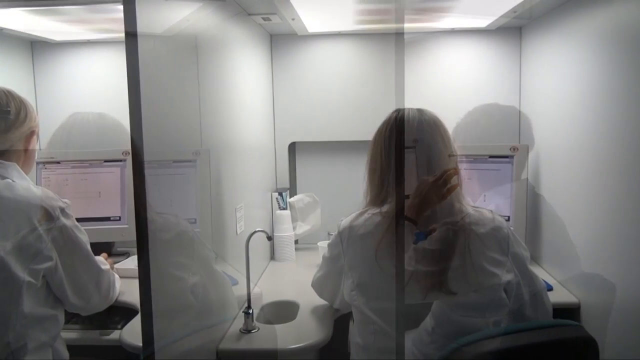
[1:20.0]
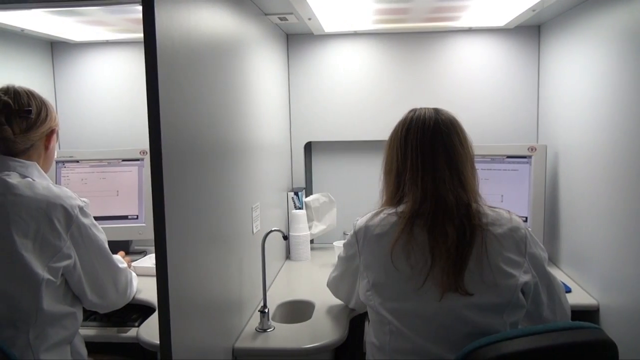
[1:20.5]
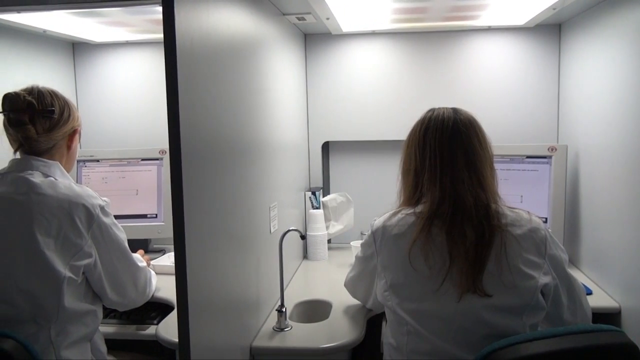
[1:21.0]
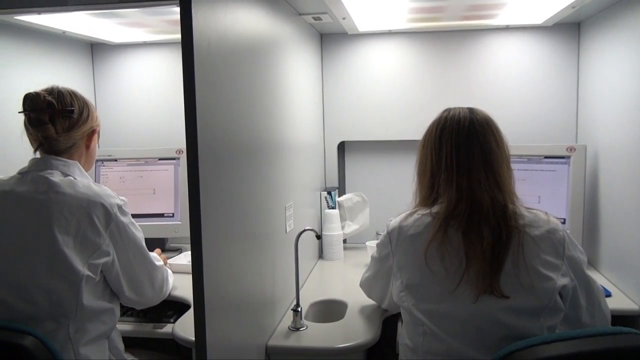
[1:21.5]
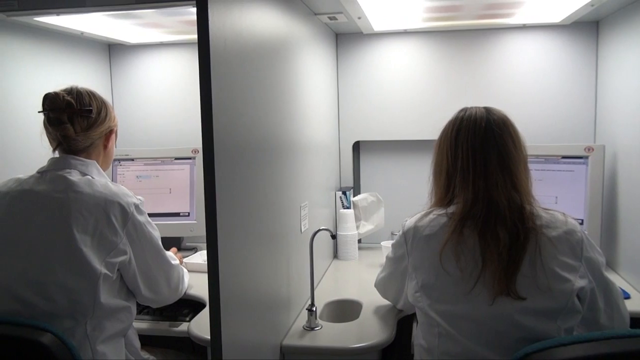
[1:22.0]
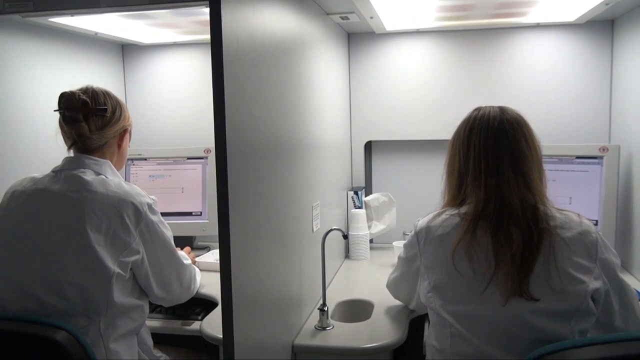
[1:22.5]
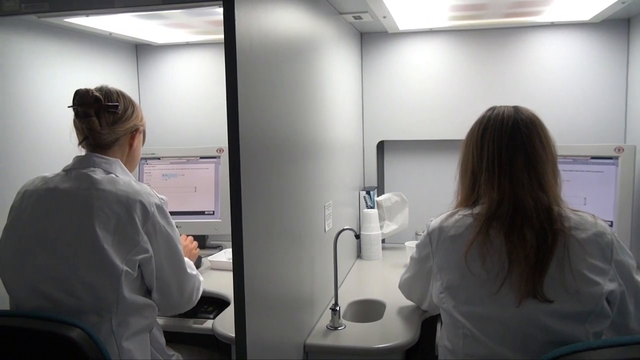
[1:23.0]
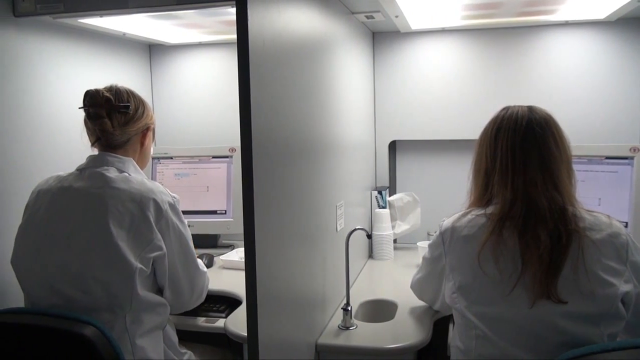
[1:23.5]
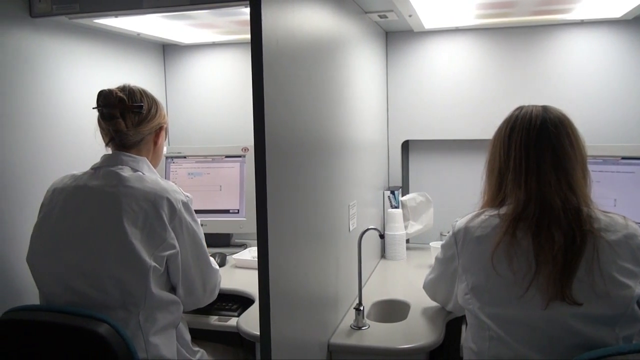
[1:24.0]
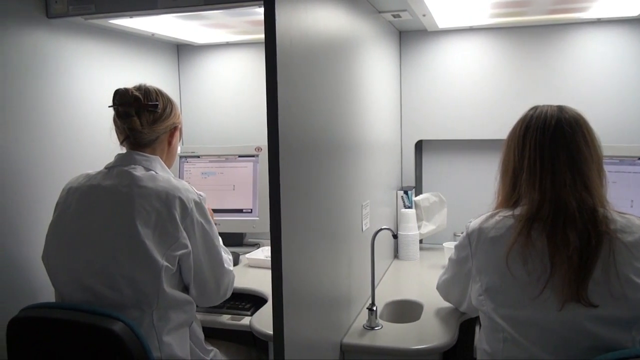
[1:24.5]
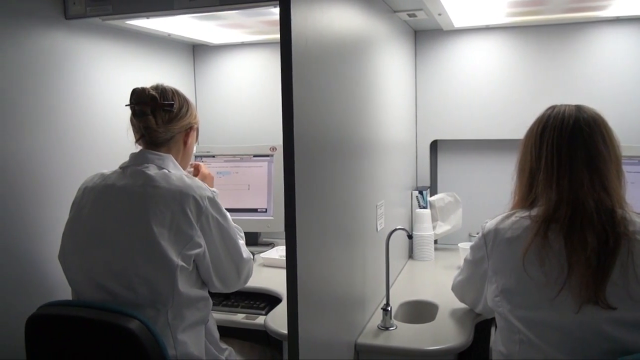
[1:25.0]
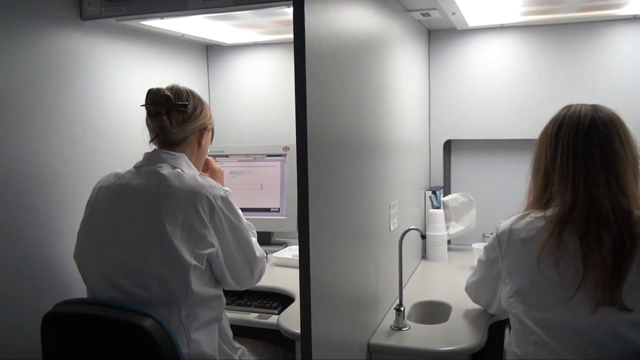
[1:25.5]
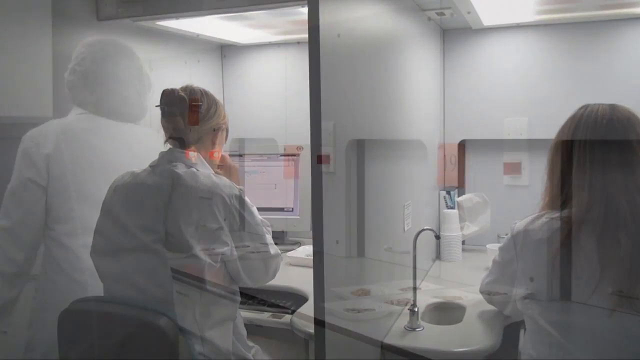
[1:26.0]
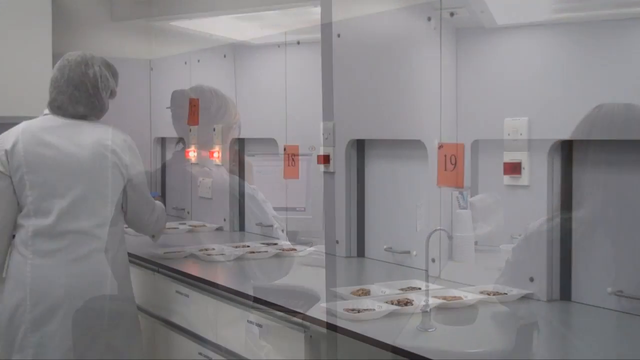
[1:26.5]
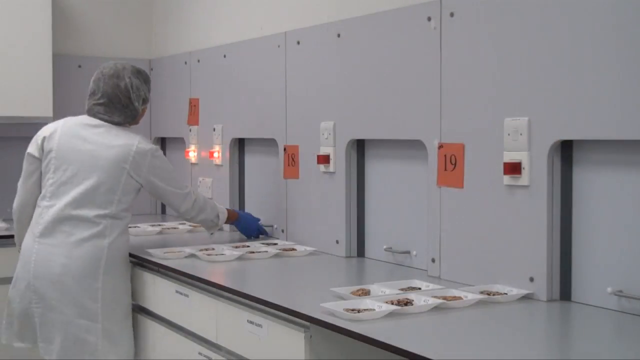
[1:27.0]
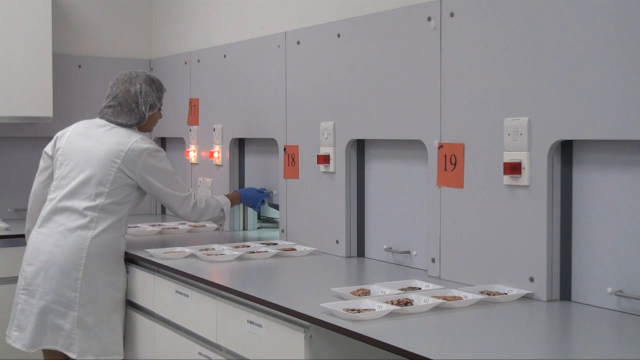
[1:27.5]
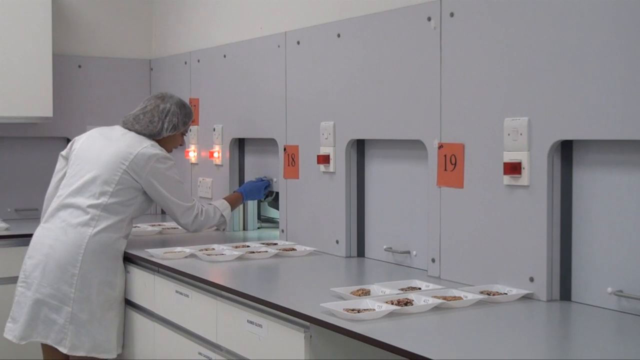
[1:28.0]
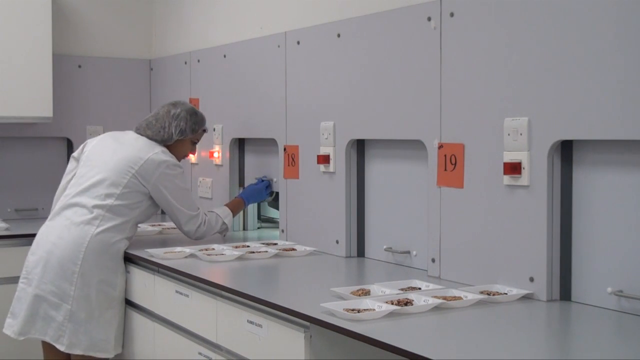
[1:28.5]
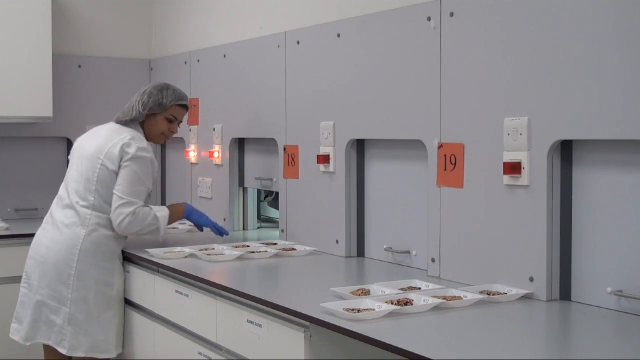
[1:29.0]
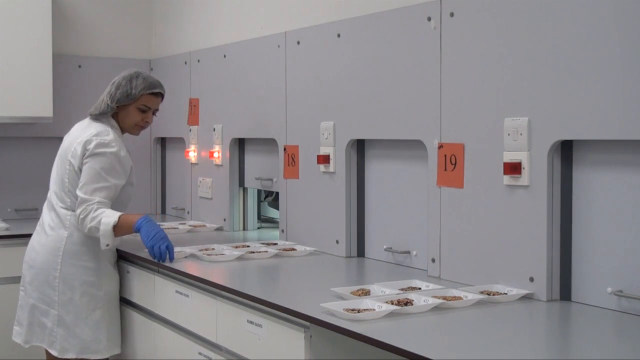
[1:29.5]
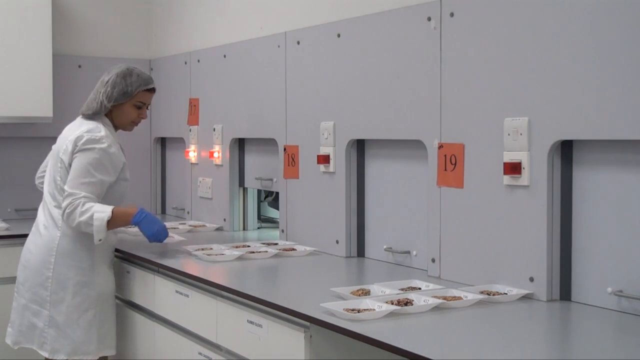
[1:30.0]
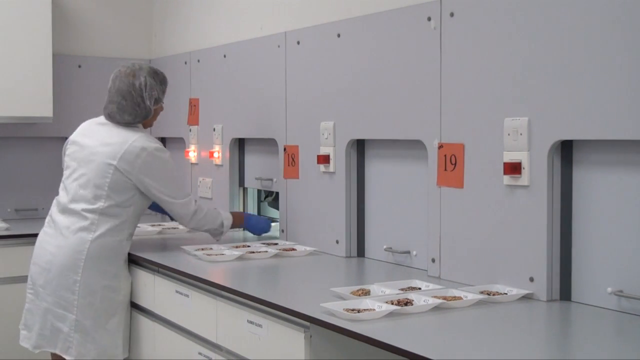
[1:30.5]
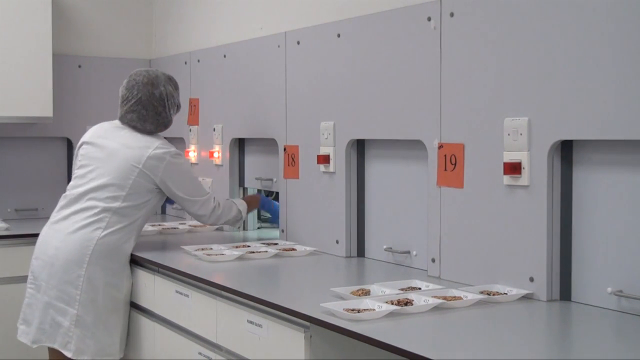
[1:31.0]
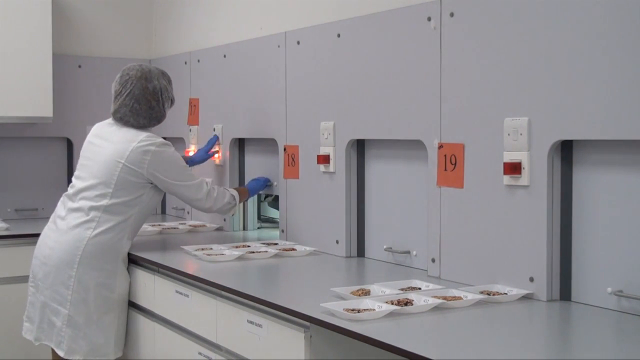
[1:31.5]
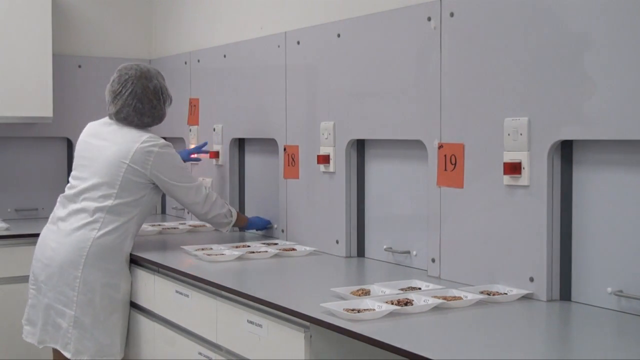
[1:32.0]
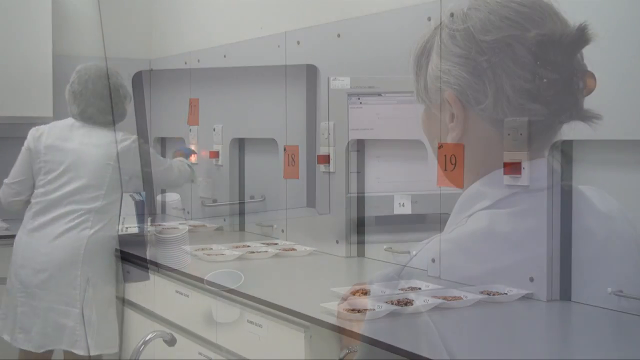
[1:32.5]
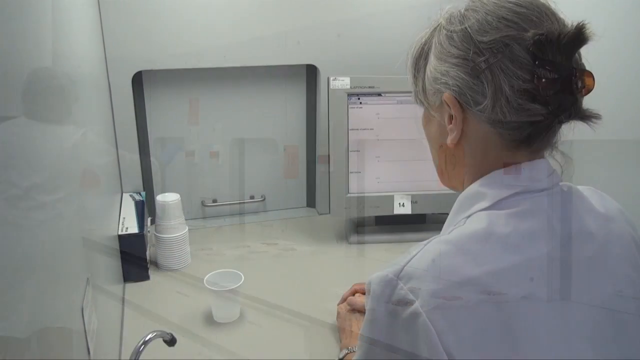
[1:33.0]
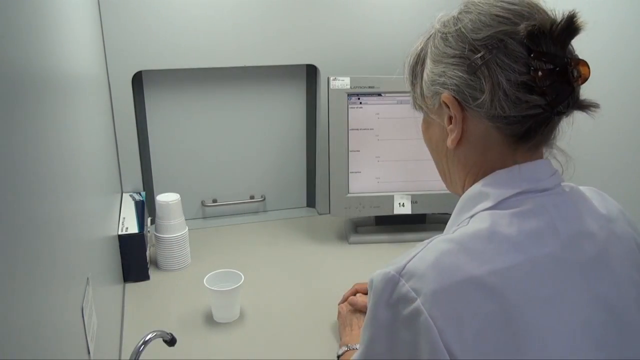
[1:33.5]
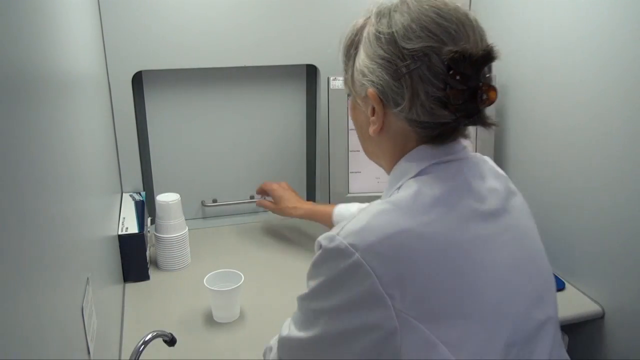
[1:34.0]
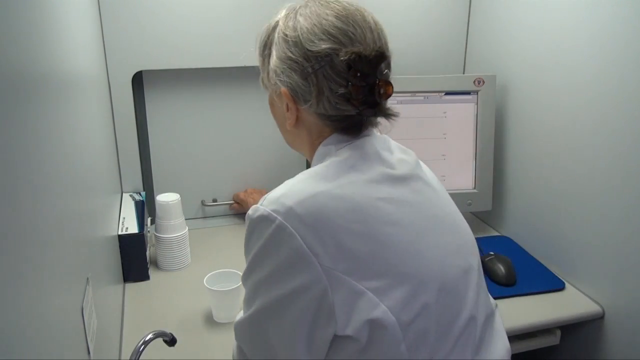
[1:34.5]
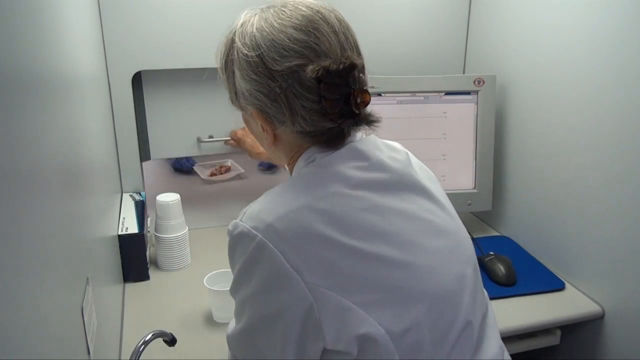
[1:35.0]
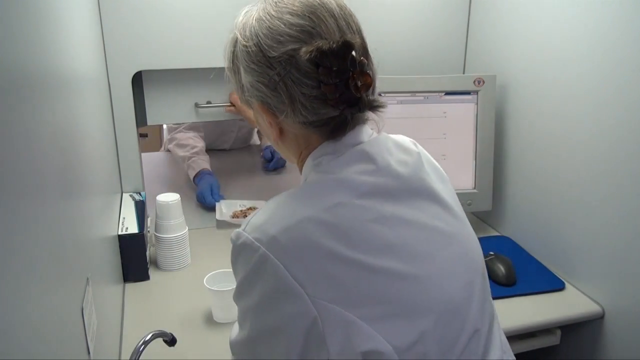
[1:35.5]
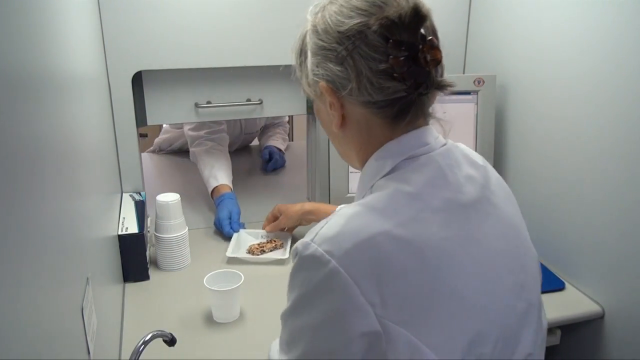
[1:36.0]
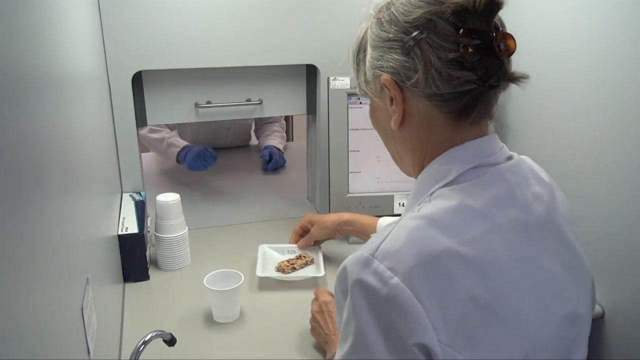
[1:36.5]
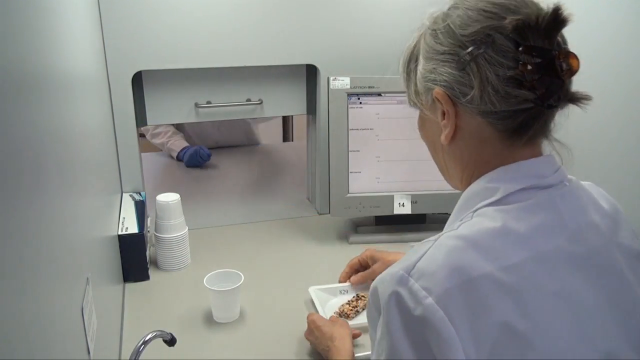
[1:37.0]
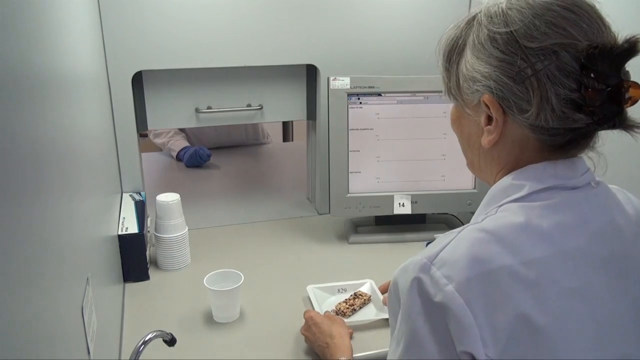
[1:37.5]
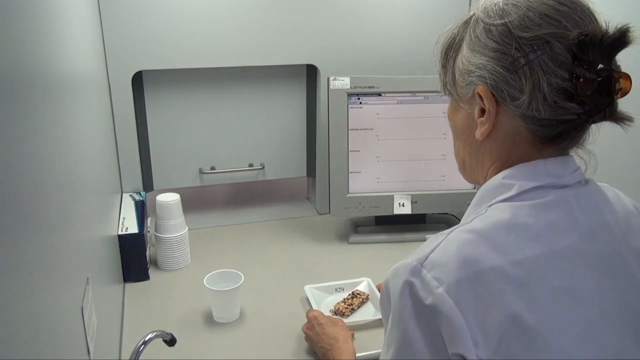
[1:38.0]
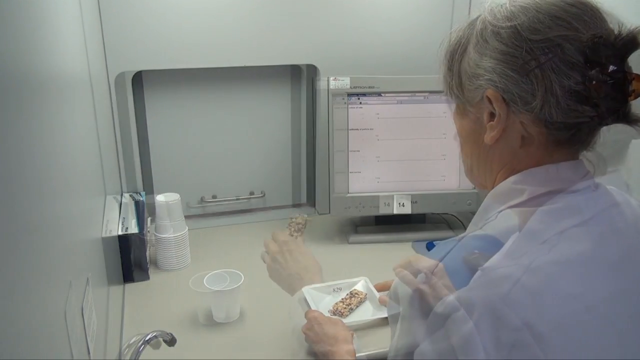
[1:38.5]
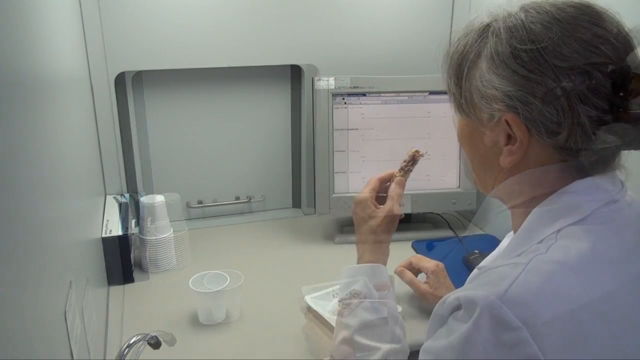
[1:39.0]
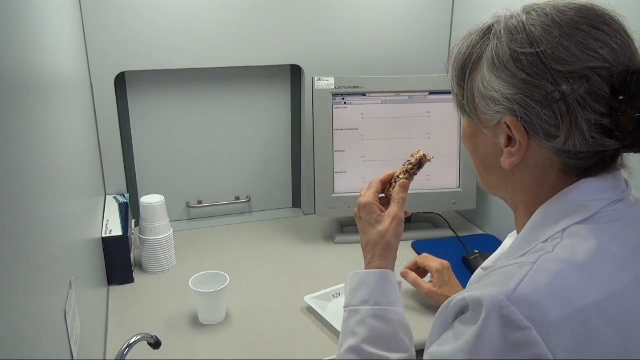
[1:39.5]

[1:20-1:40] The women are now in front of the doors, kept in their separate rooms, seemingly doing a taste test. The food samples are passed to them through the doors that open like garages. For one woman, the piece of food that looks like wheat pigs is slid under the small window-like door onto her side; she is given it inside a takeout, and she instantly puts it in her mouth. There is also something that looks like a white takeout cup, apparently used in this place. The woman handing out the food wears what look like blue safety gloves and looks very confident. The place is well lit.